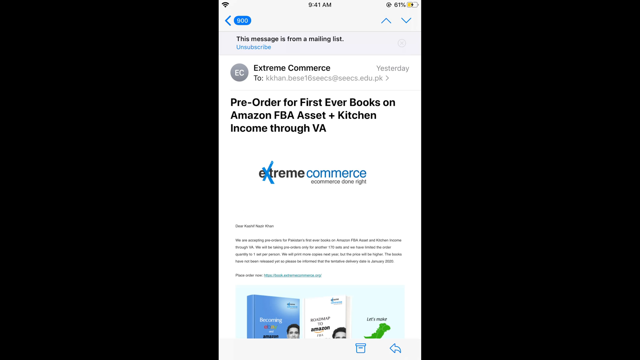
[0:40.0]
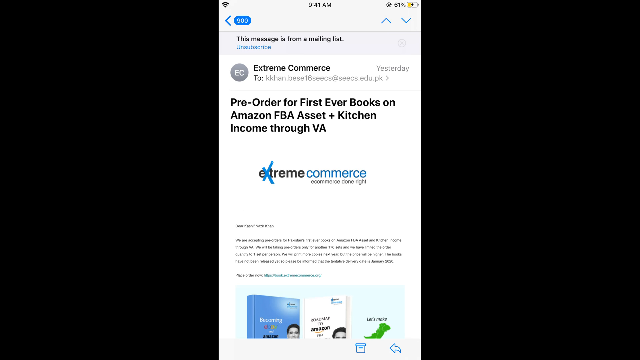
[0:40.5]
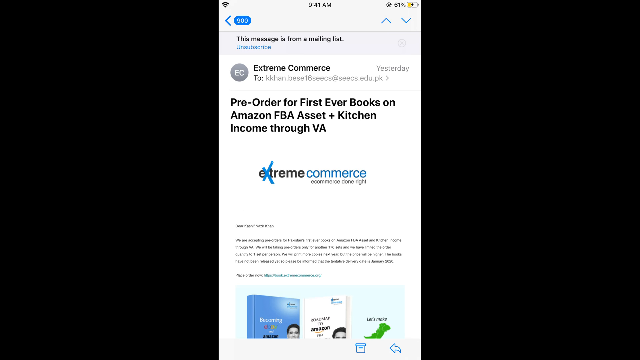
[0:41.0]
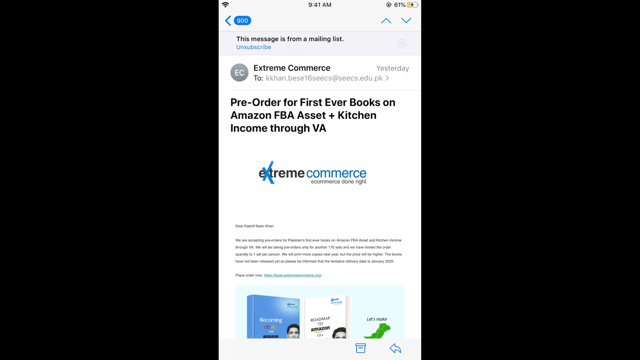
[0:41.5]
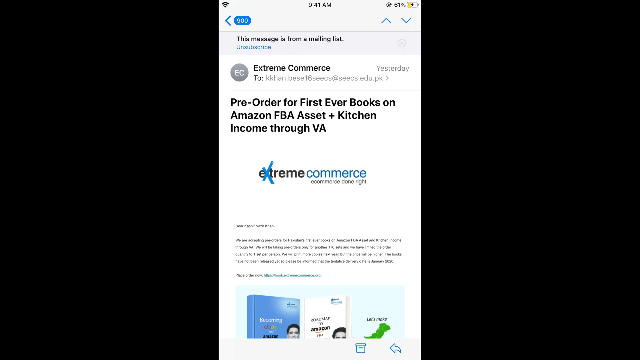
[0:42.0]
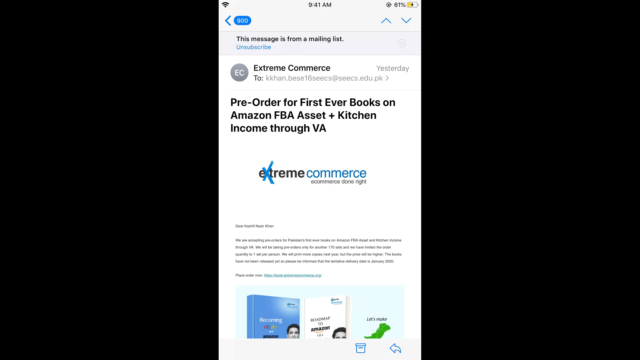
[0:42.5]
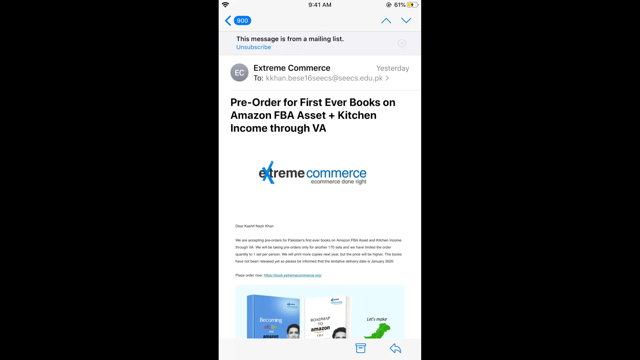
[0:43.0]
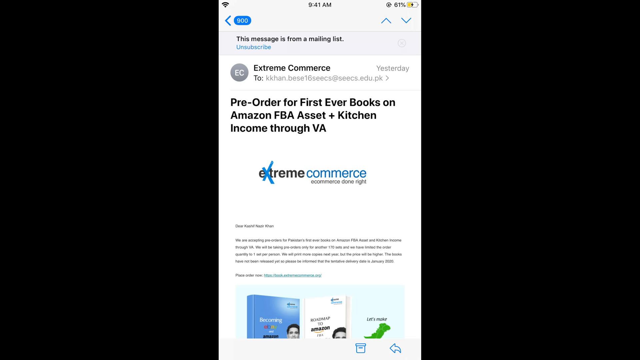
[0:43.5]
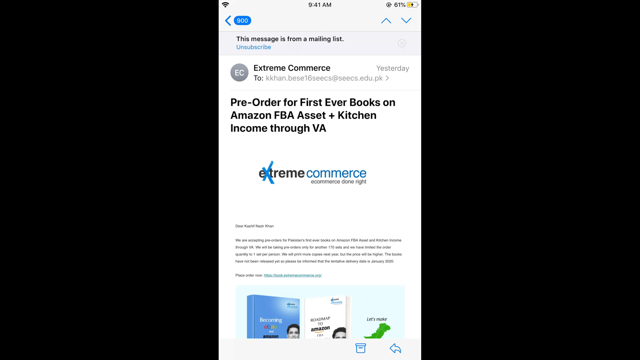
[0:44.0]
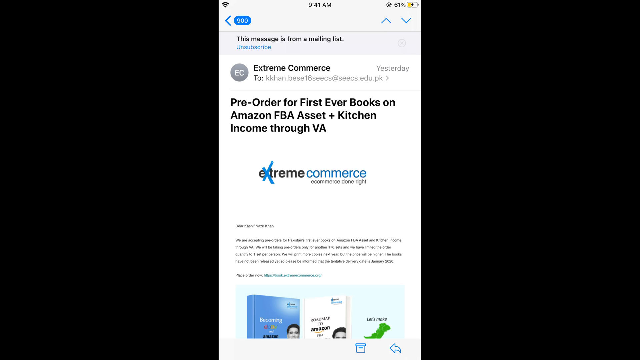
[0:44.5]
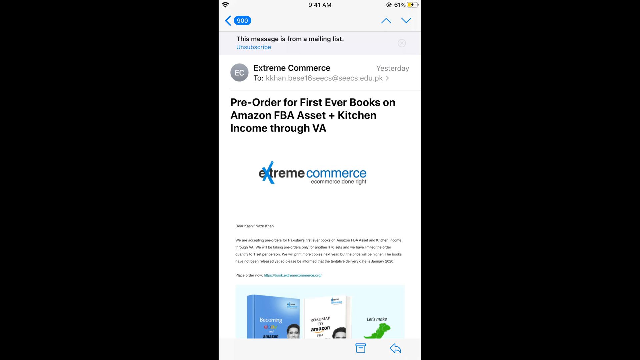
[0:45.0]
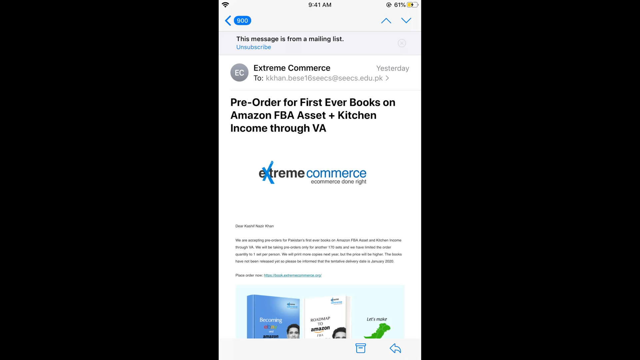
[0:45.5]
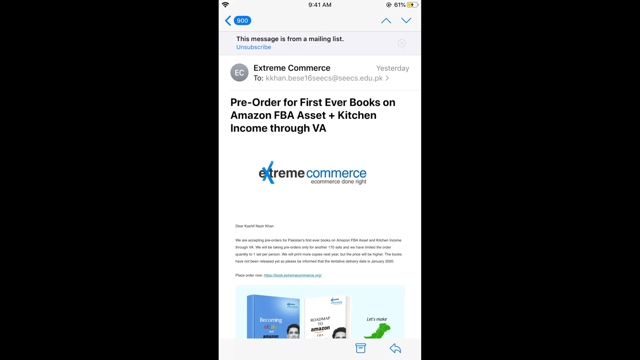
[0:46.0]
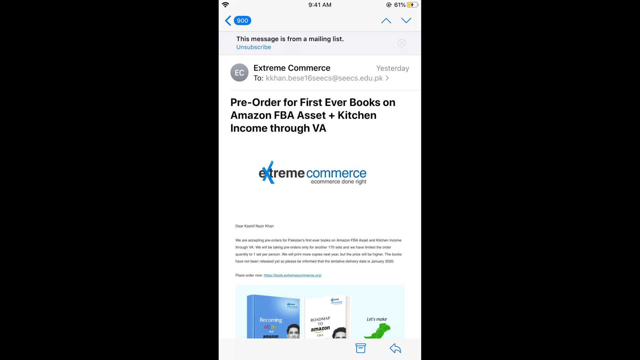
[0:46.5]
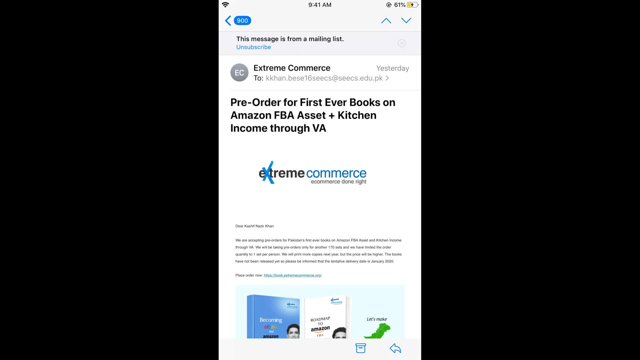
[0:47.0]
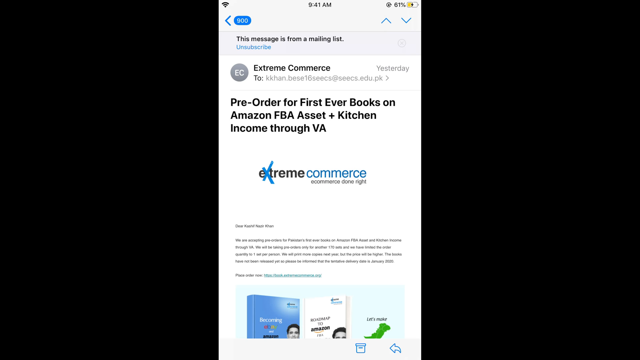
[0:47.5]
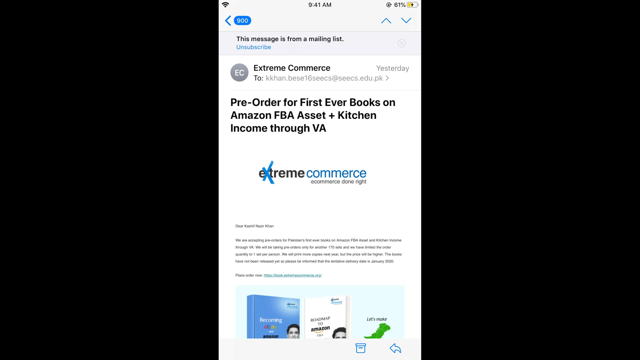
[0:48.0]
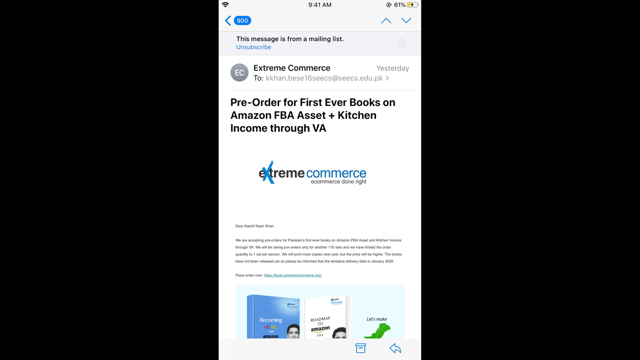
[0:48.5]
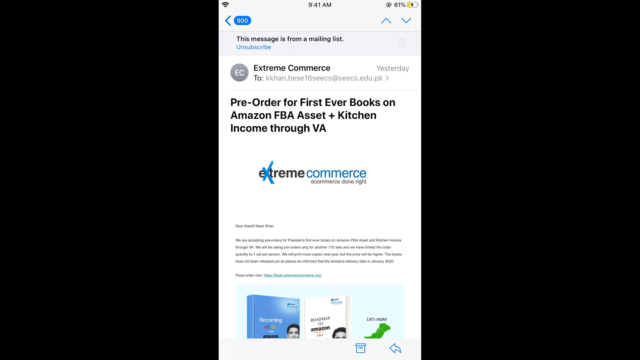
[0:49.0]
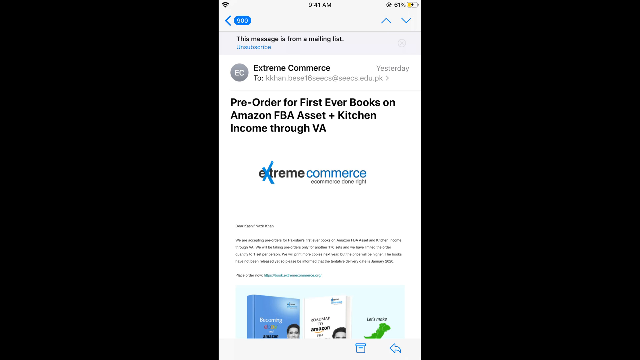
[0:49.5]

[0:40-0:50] A mailbox screen shows the time 9:41am, the battery at 61%, and apparently 900 in the mailbox. Below that a message reads "this message is from a mailing list". The email from Extreme Commerce reads "pre-order for first ever books on Amazon FBA", with the Extreme Commerce logo below it and the text "e-commerce done right" beneath that. At the bottom there seem to be three books, one blue and another white. Other information on the page is written in print too small to read. The email looks like it was sent to Con, and it reads "yesterday", indicating it was sent the previous day. A Wi-Fi sign in the top left corner shows the phone is connected to Wi-Fi.